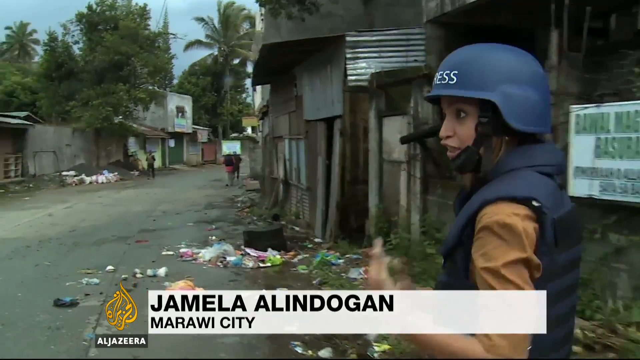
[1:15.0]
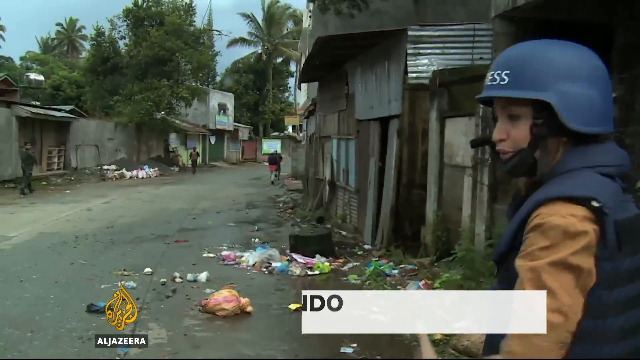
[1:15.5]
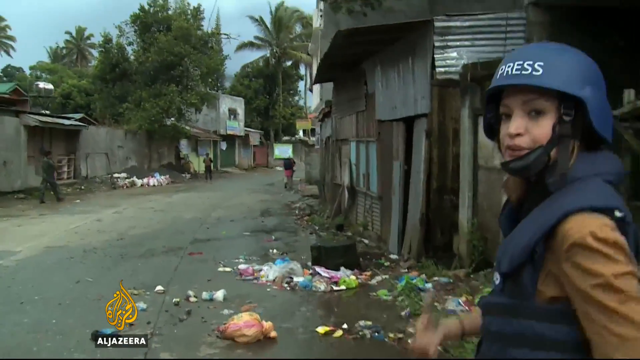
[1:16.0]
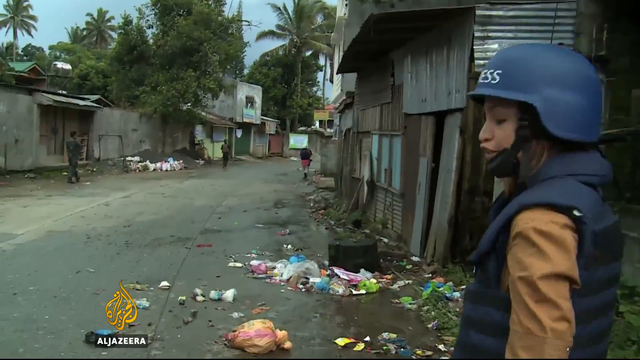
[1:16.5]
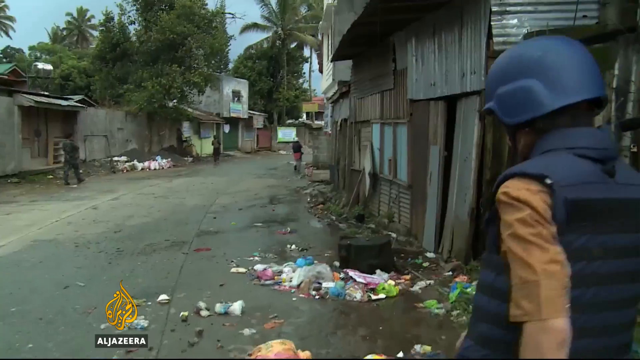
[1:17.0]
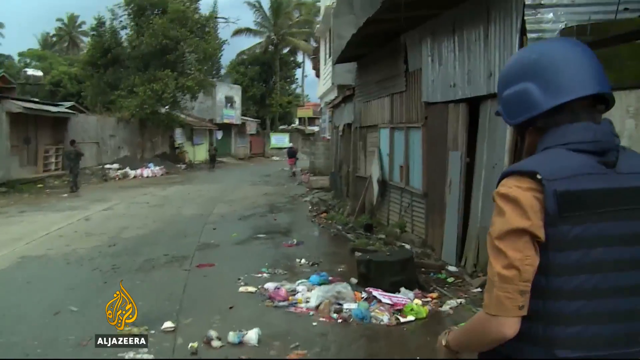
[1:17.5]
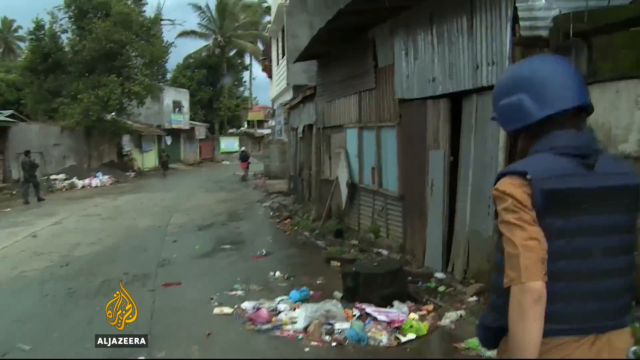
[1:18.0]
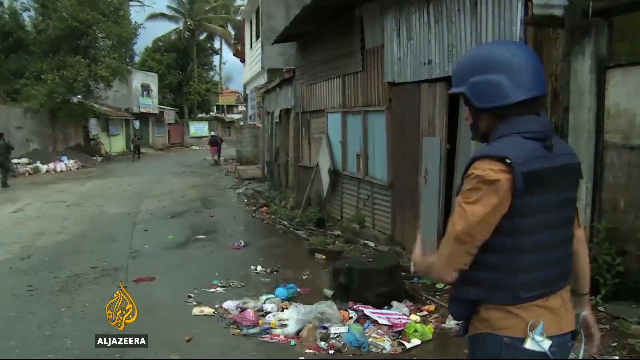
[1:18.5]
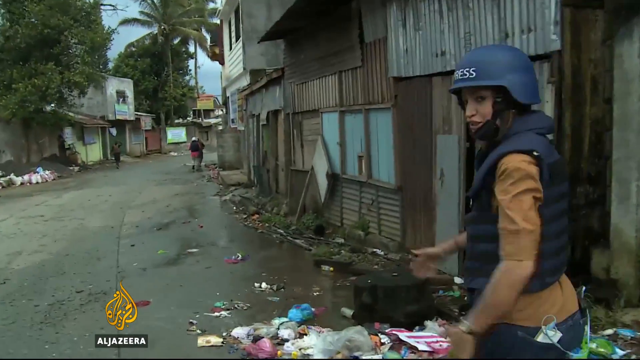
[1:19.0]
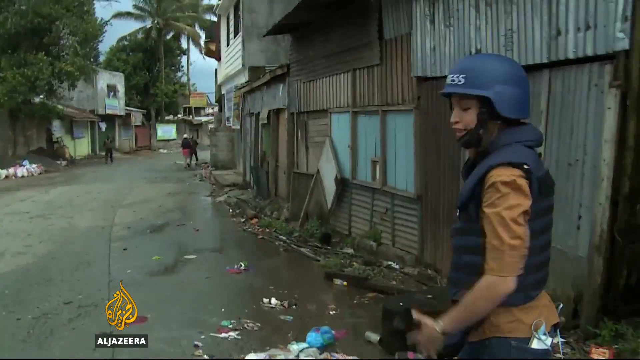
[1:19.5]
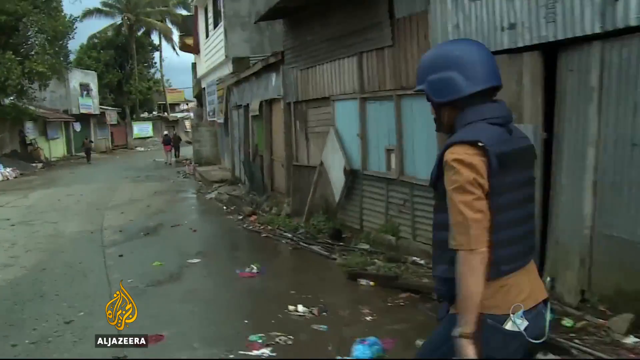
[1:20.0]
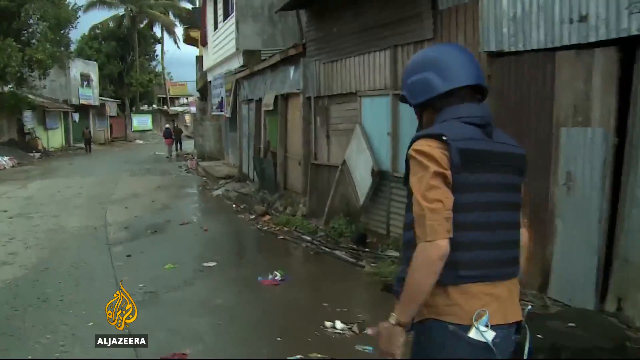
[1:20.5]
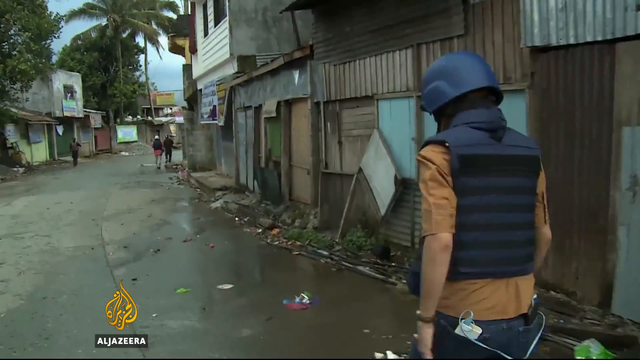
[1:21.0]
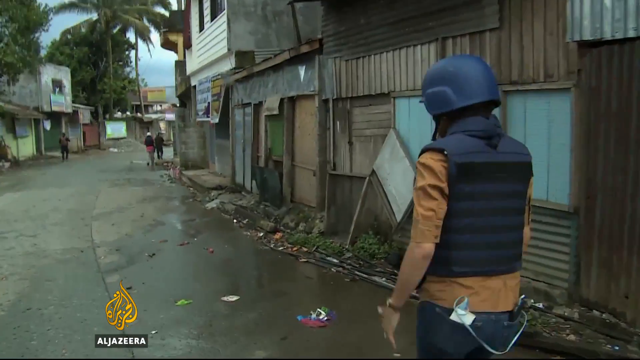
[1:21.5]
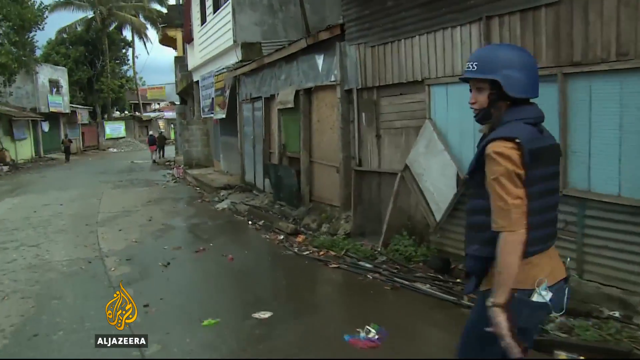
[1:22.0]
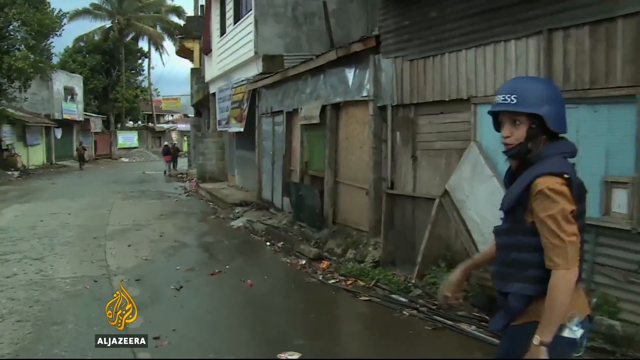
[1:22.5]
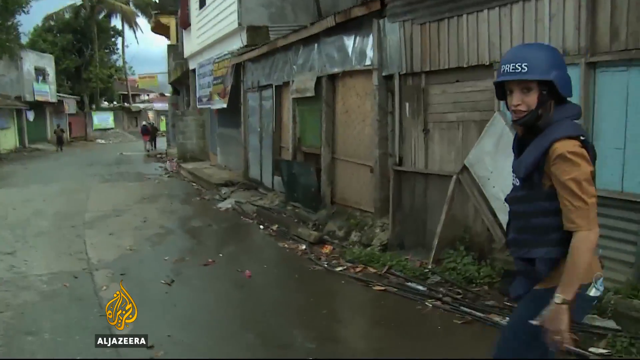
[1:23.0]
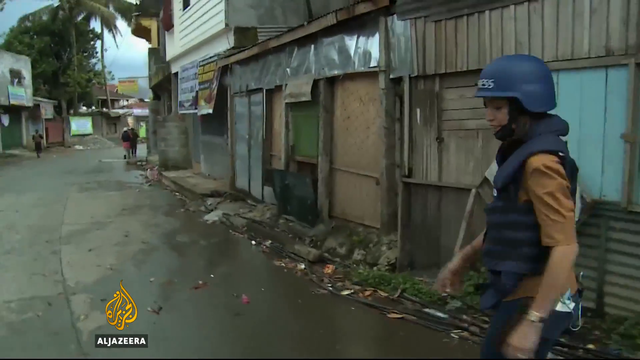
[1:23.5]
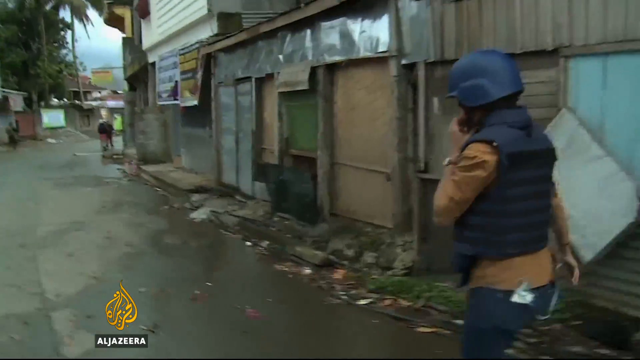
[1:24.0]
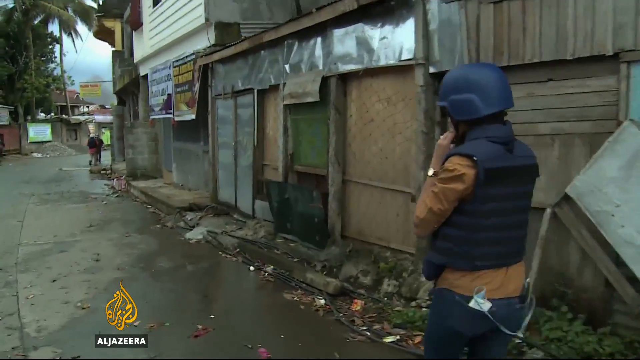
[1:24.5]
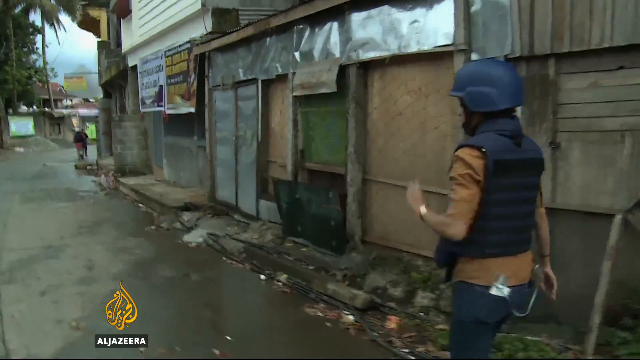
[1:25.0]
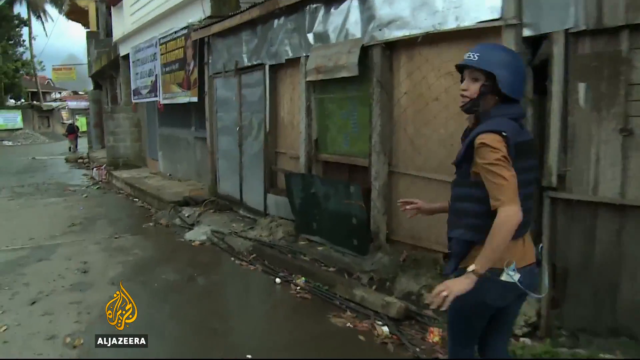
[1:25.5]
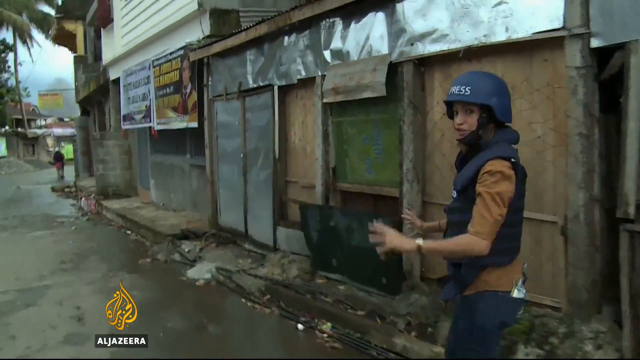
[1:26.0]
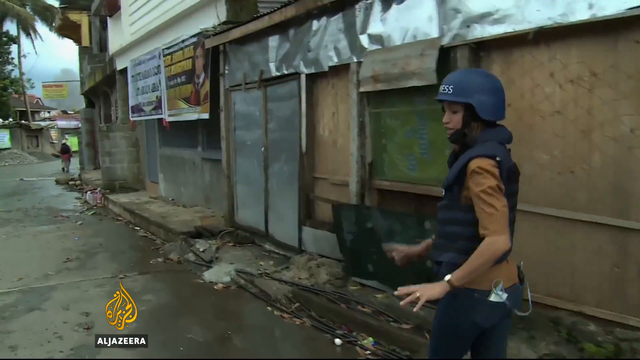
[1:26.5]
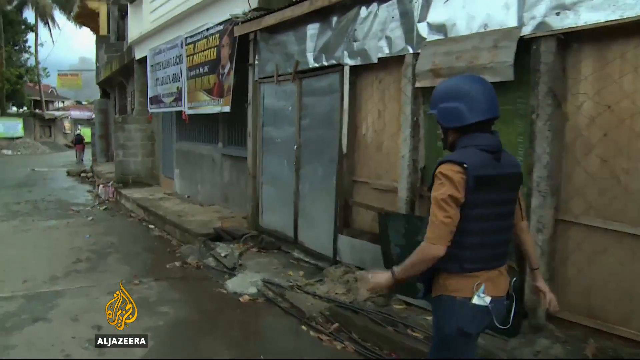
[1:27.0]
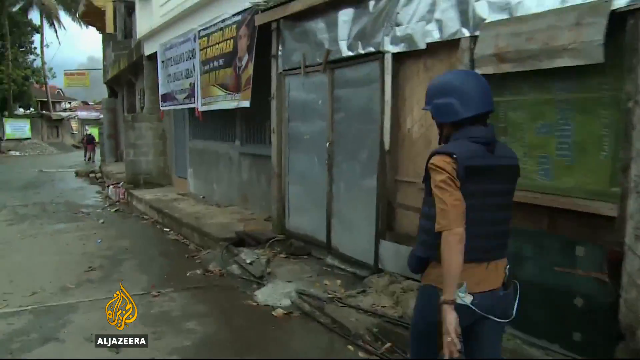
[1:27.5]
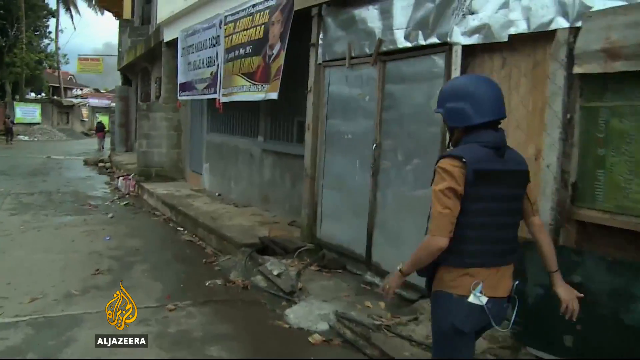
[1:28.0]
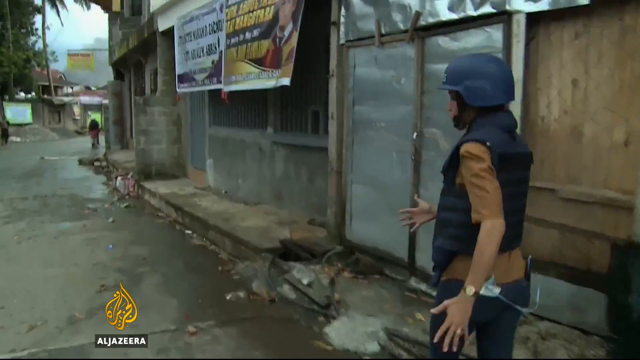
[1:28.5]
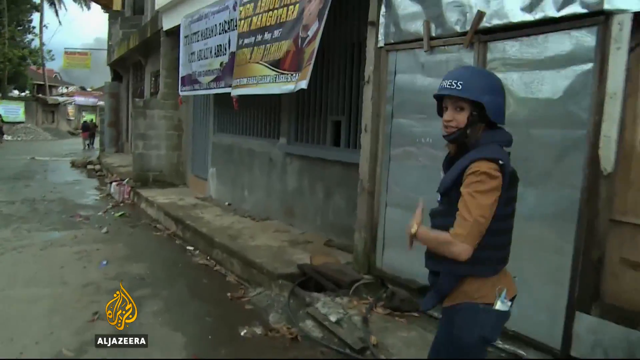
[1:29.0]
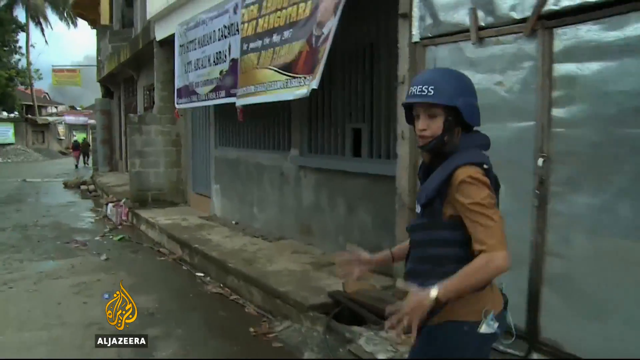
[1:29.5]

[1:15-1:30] The camera continues to follow the reporter as she walks and talks down the street. Everything is abandoned: shops and windows are boarded up, trash is strewn about, and no one seems to be inhabiting any of the buildings or shacks. The two people remain quite a ways in front of her, presumably part of her crew. There are no vehicles, the street is completely empty, and there is no sign of any fighting.